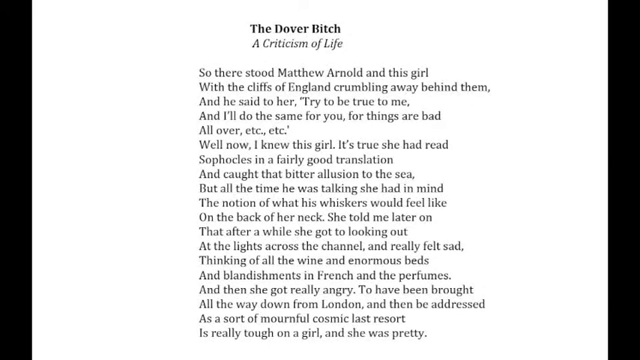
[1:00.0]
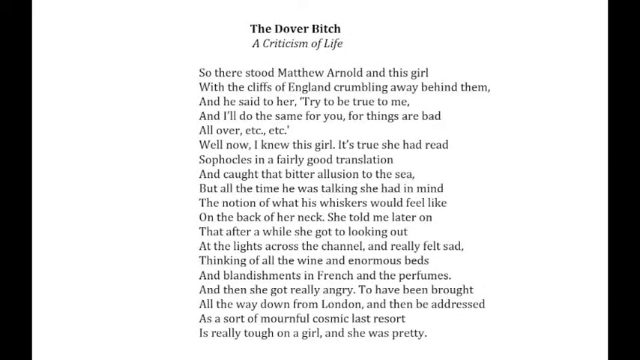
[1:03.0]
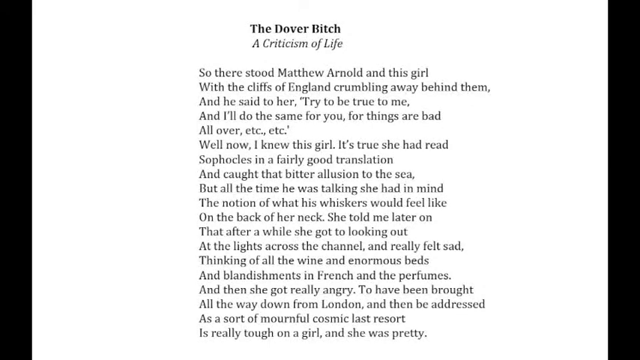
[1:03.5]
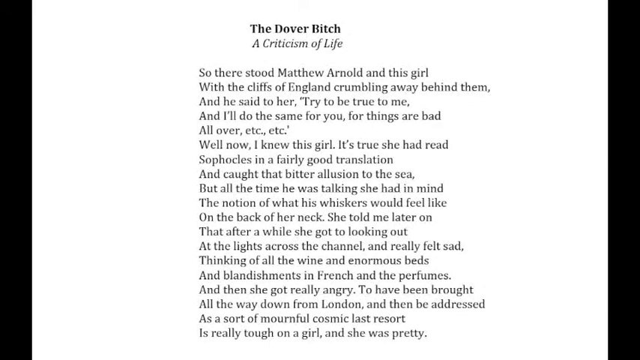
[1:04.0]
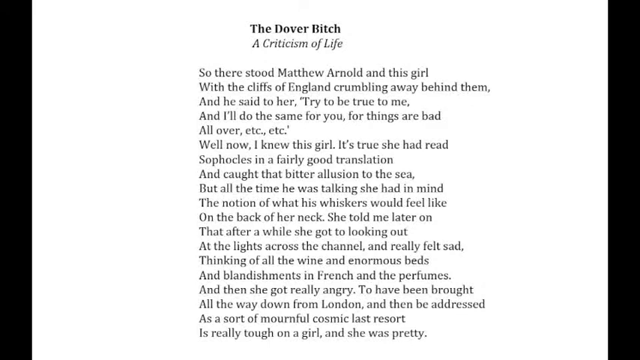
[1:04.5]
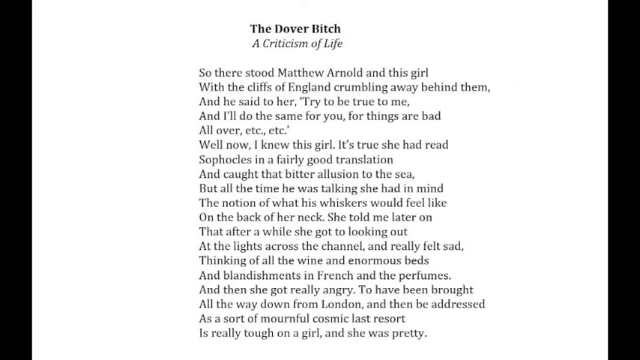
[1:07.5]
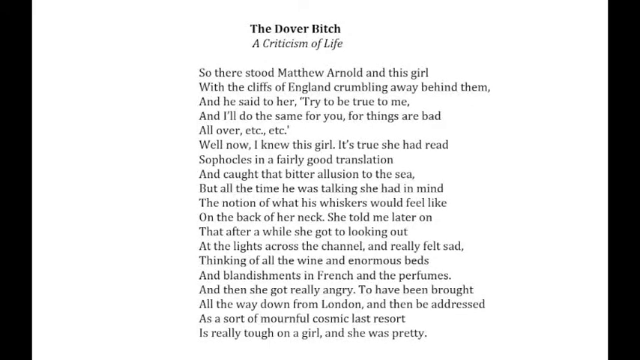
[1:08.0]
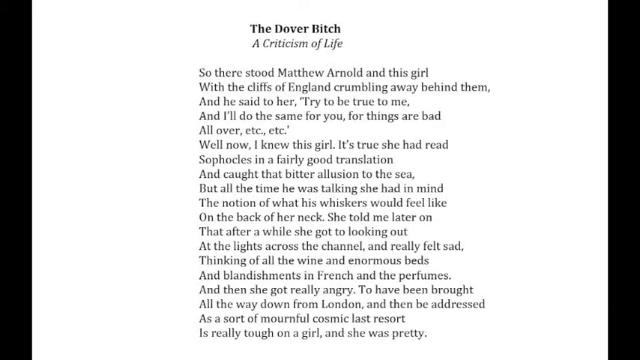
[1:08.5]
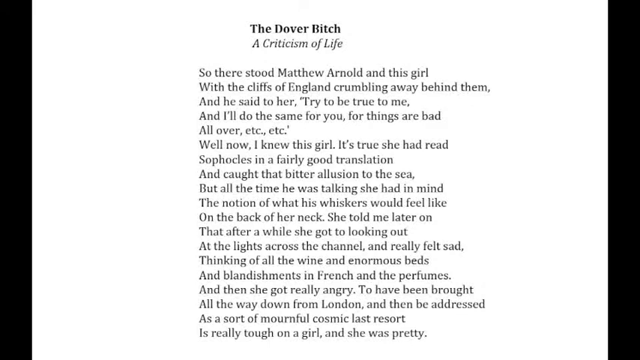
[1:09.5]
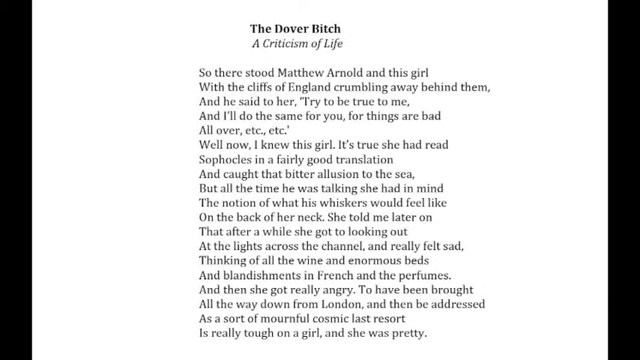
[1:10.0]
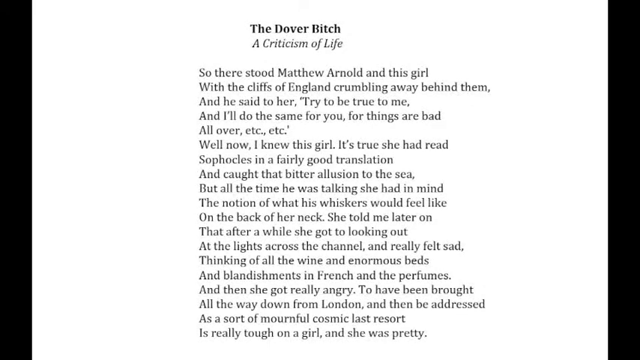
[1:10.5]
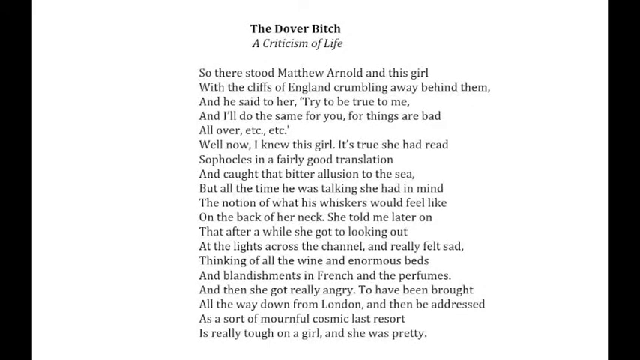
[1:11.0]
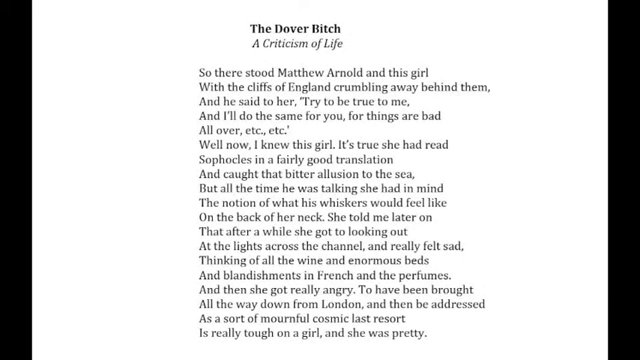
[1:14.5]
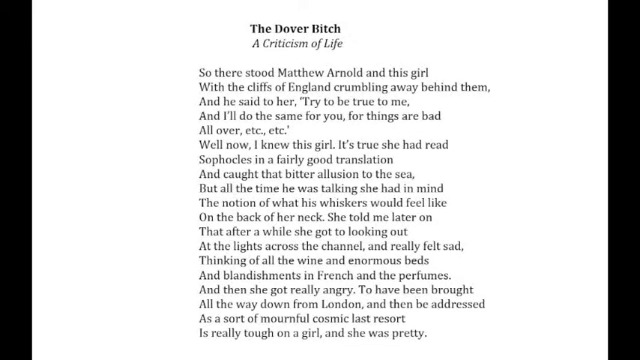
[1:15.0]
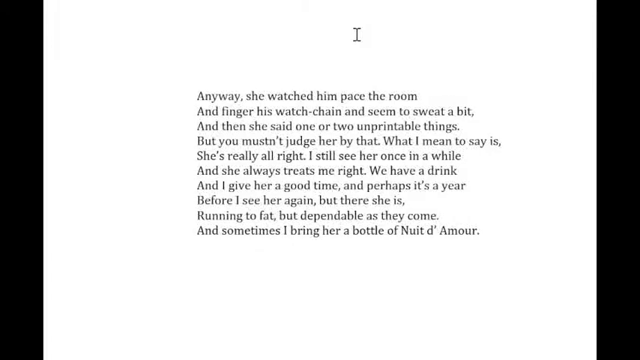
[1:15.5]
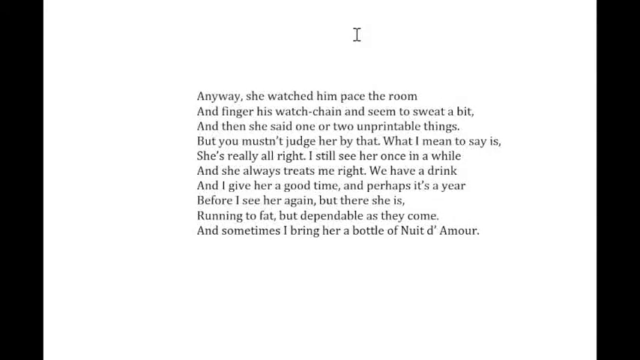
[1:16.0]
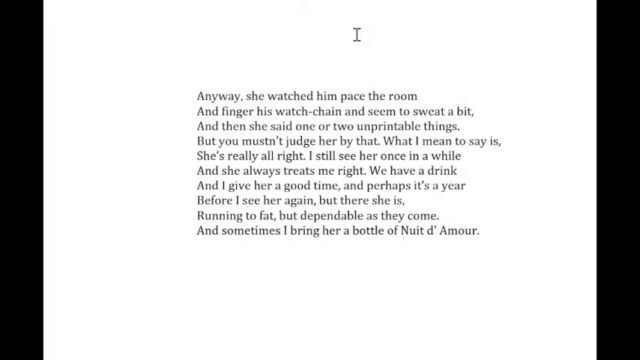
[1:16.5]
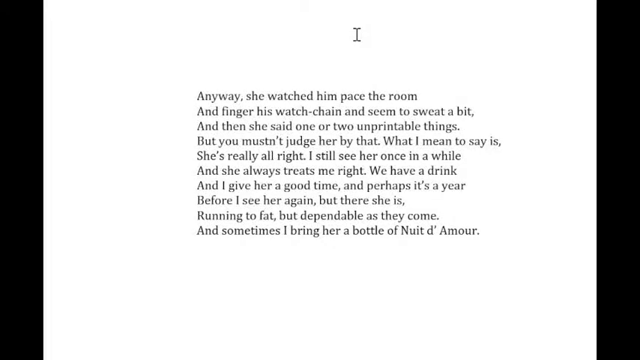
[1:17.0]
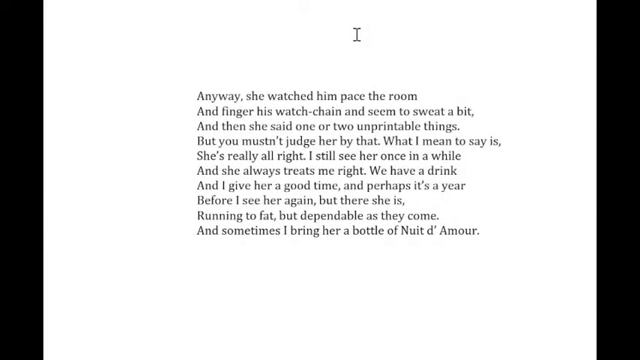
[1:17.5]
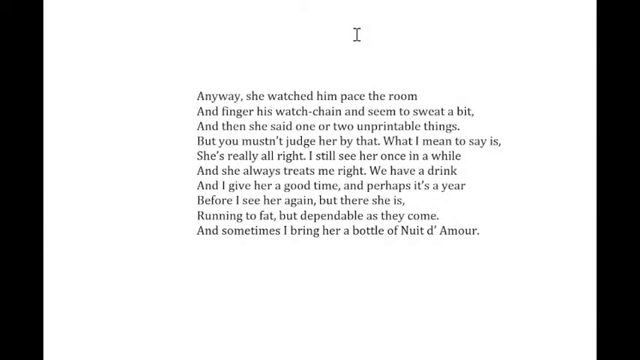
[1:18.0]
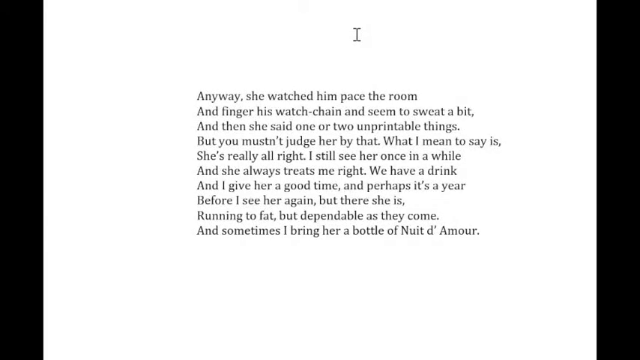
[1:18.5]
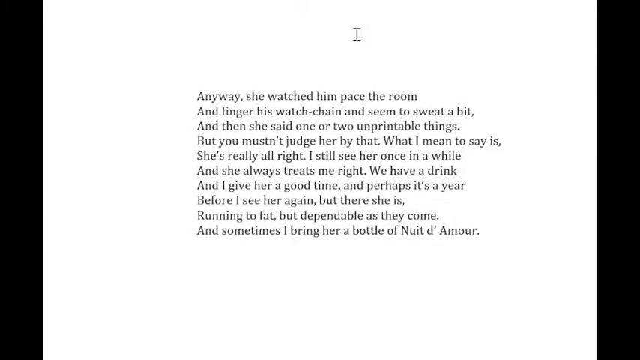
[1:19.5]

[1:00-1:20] The white document has closely spaced text that is kind of hard to read. The left edge is flush, while the right side goes in and out because some lines, like line two, are a little longer. The "etc etc" line is the shortest, the next shortest are the lines with "good translation" and "last resort", and the line with "pretty" is probably the fourth shortest. The next page appears, and an eye-looking cursor near the top shows that it is on a computer. This page has about ten left-aligned lines, including "anyway, she watched him", "and finger his watch chain and seem to sweat a bit", "and then she said one or two unpredictable things", "what I mean to say is", "she's really all right. I still see her once in a while", "and she always treats me right we have a drink", "and I gave her a good time", "but there she is", "running too fat, but dependable as they come" and "sometimes I bring her a bottle of nuit de amour".